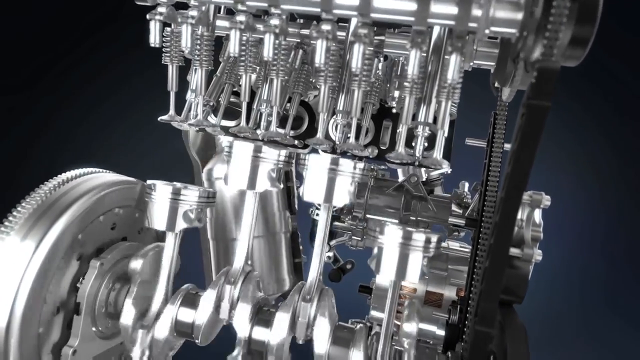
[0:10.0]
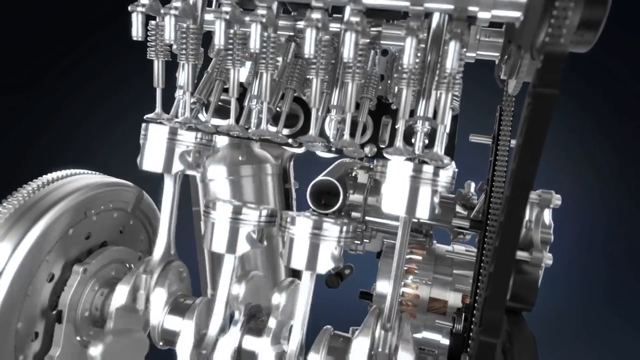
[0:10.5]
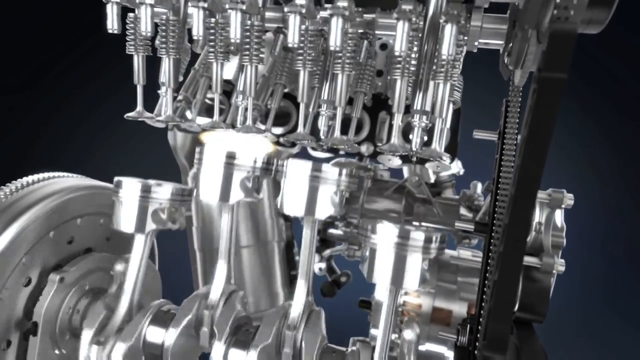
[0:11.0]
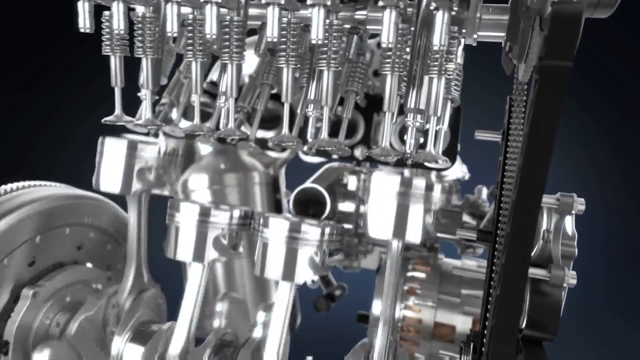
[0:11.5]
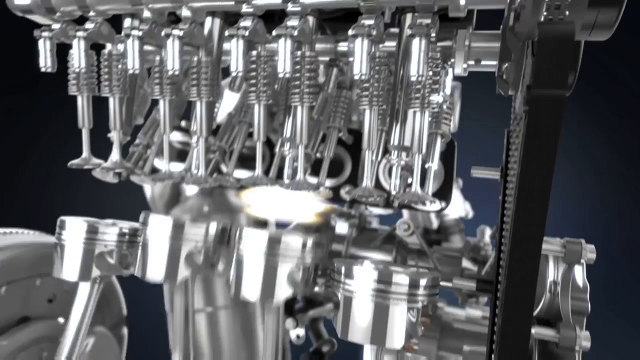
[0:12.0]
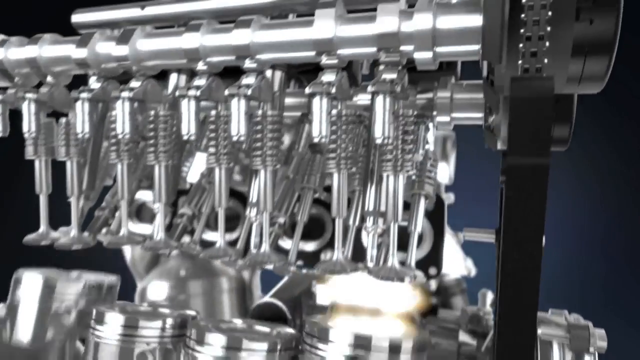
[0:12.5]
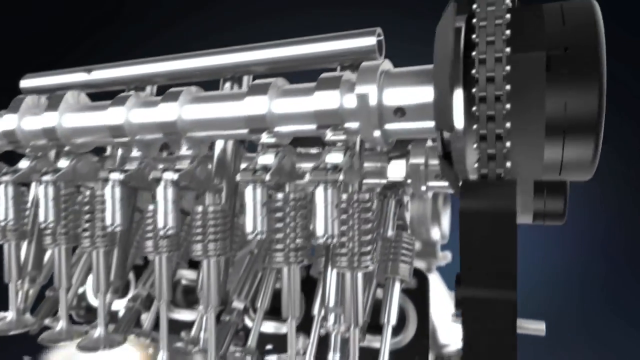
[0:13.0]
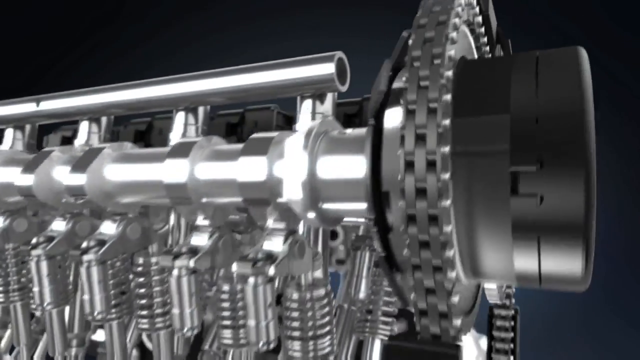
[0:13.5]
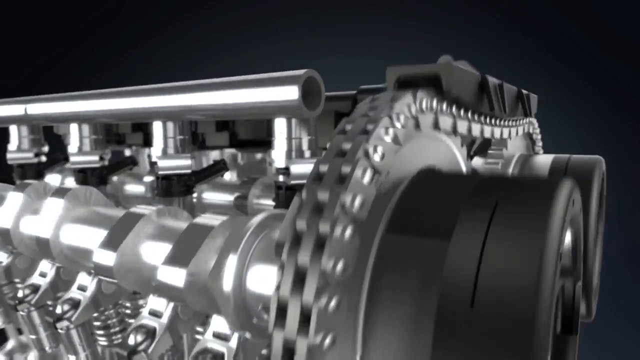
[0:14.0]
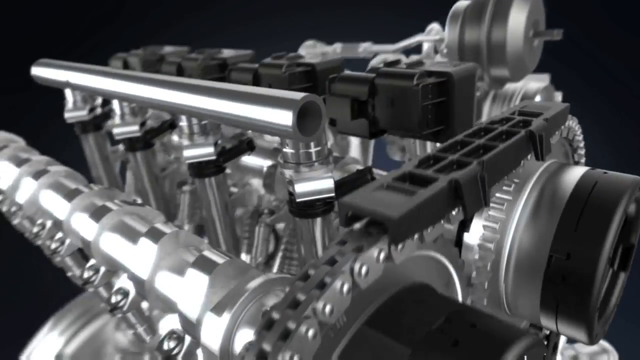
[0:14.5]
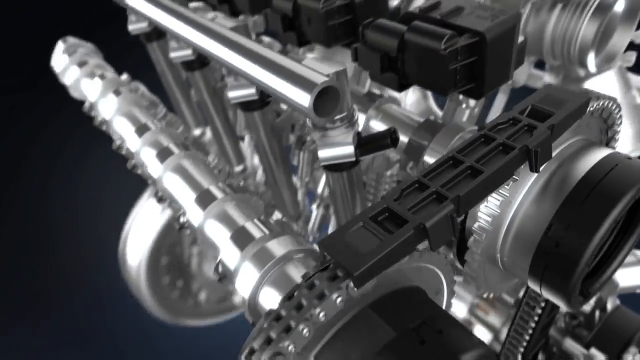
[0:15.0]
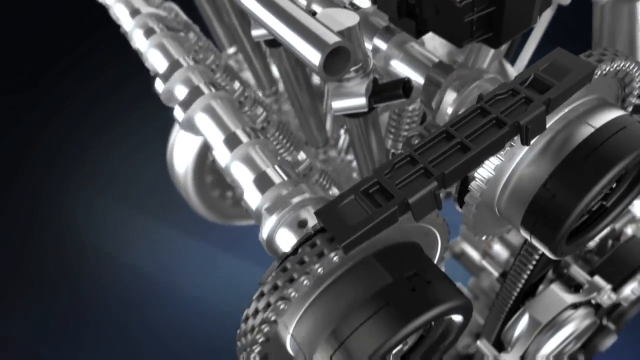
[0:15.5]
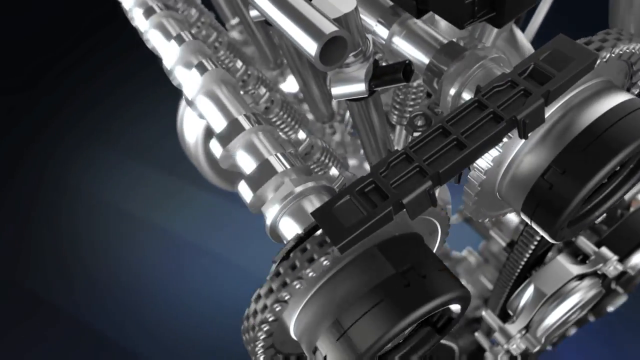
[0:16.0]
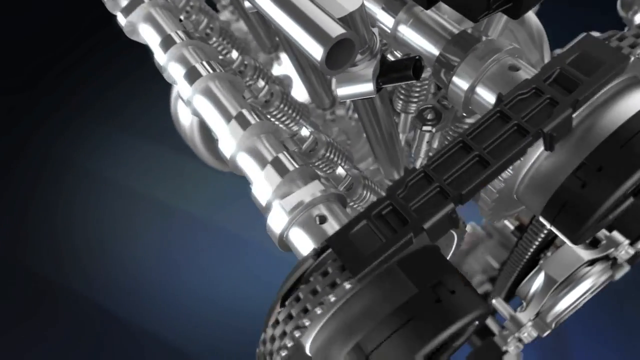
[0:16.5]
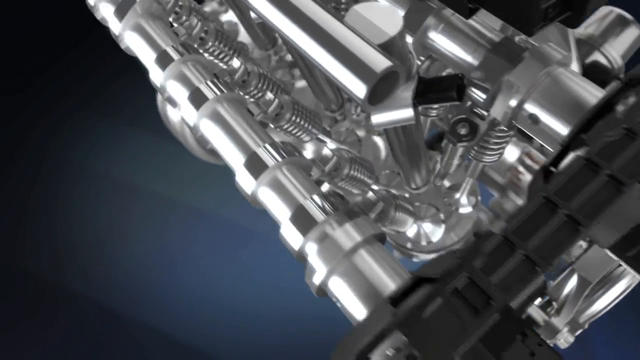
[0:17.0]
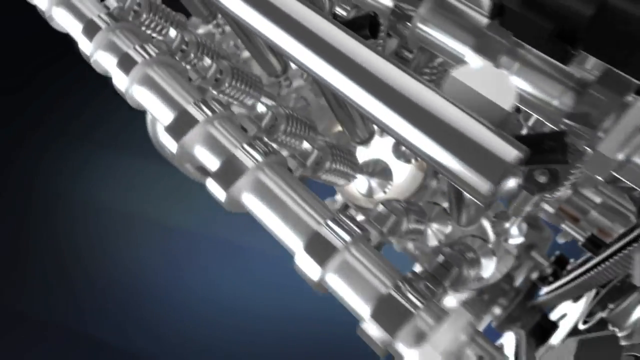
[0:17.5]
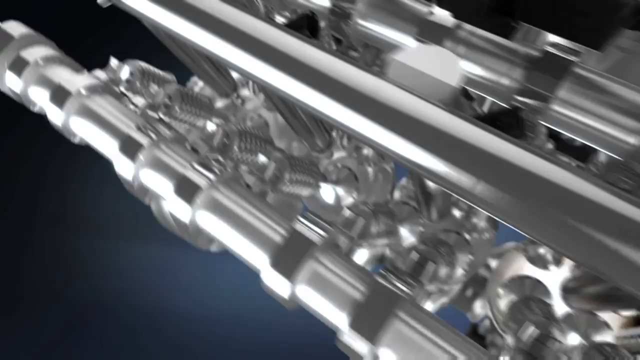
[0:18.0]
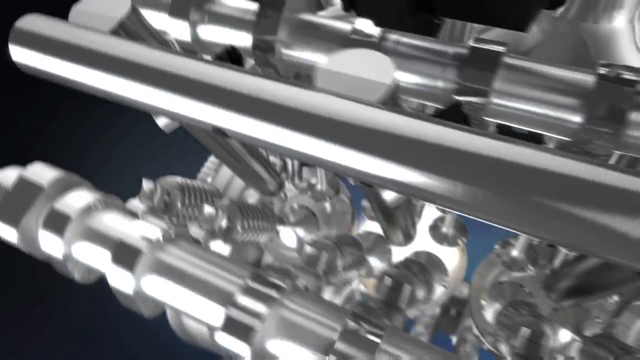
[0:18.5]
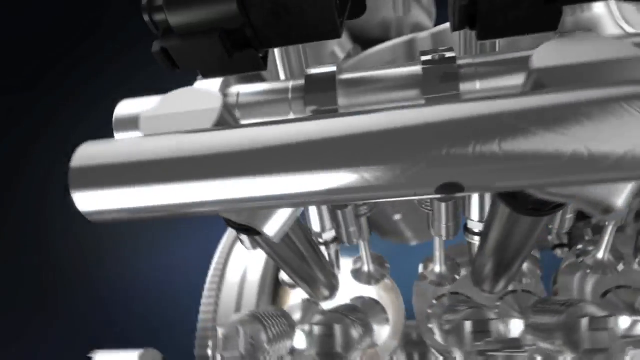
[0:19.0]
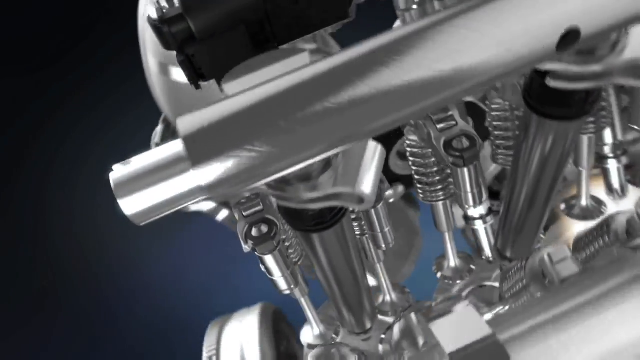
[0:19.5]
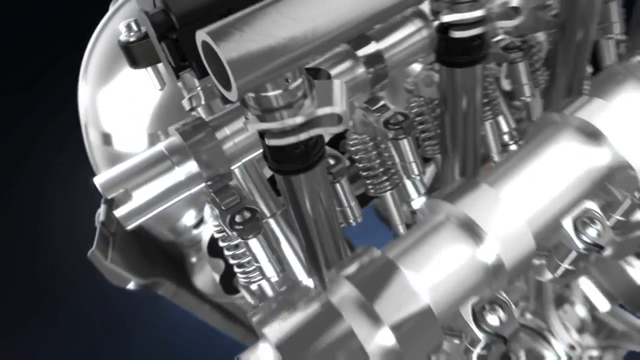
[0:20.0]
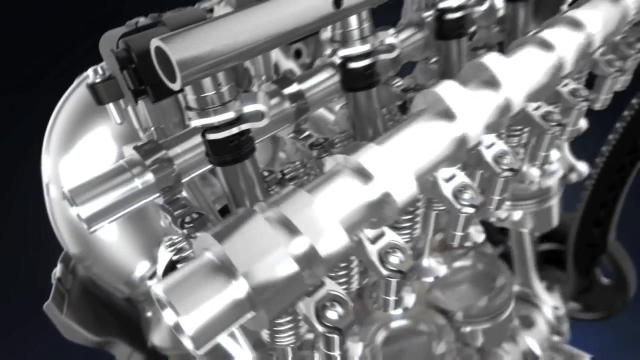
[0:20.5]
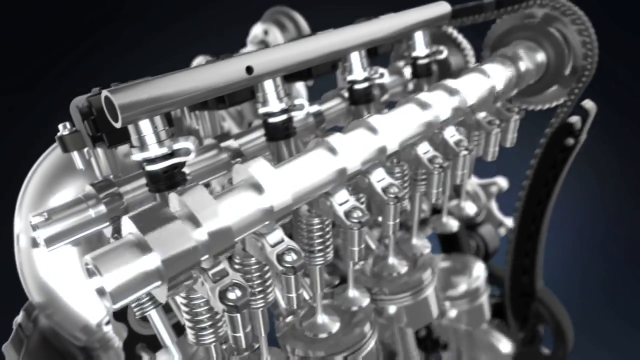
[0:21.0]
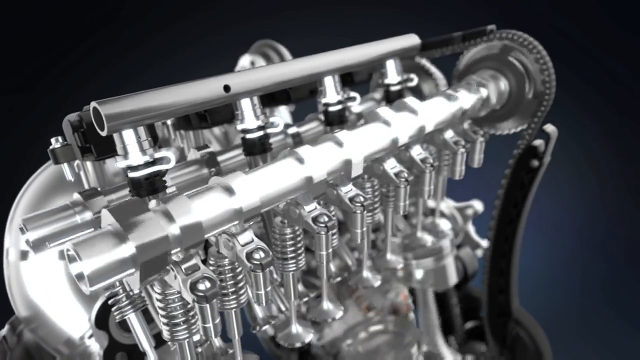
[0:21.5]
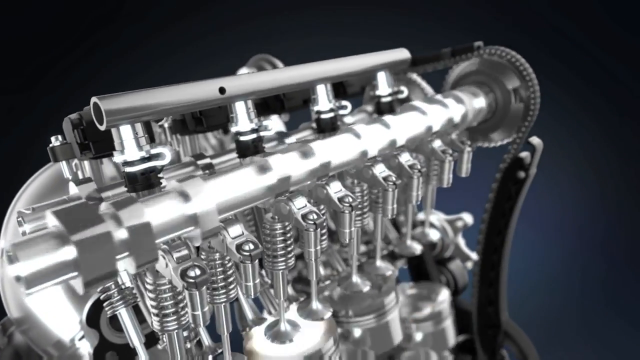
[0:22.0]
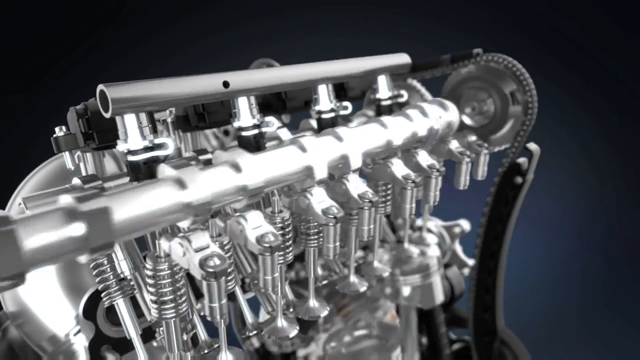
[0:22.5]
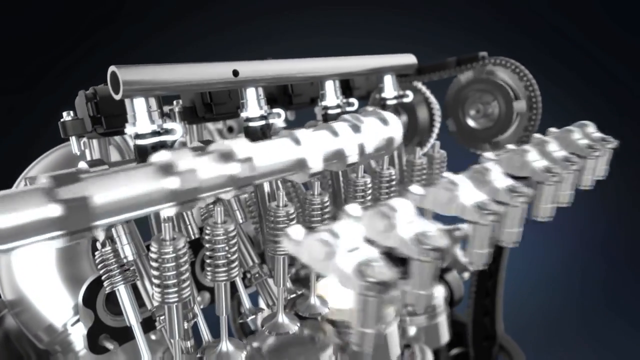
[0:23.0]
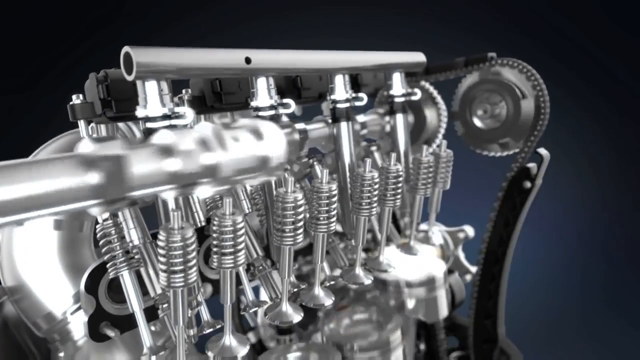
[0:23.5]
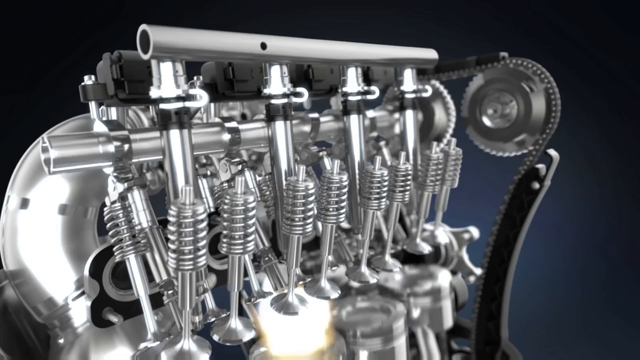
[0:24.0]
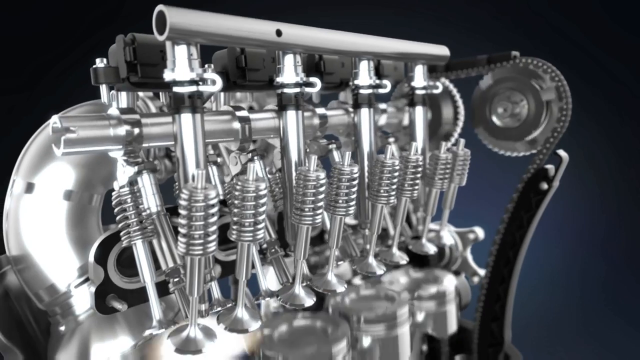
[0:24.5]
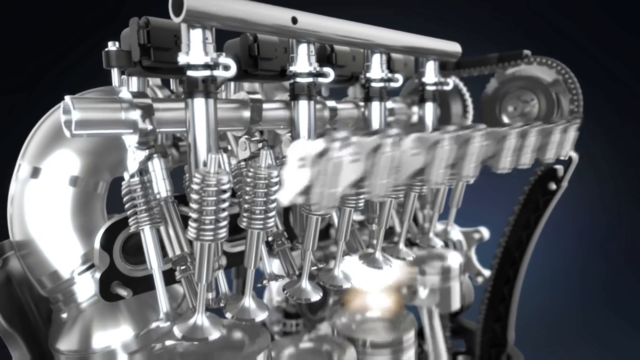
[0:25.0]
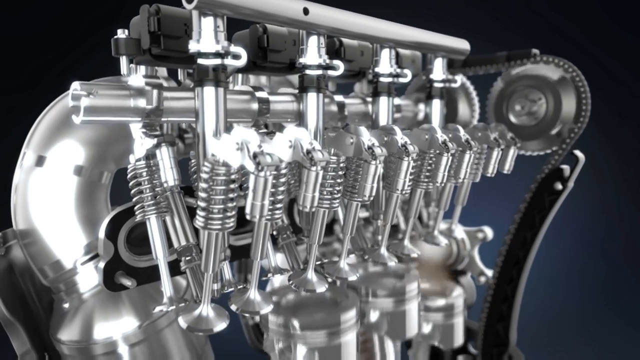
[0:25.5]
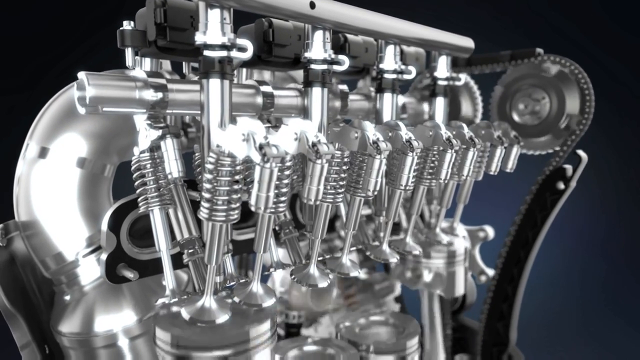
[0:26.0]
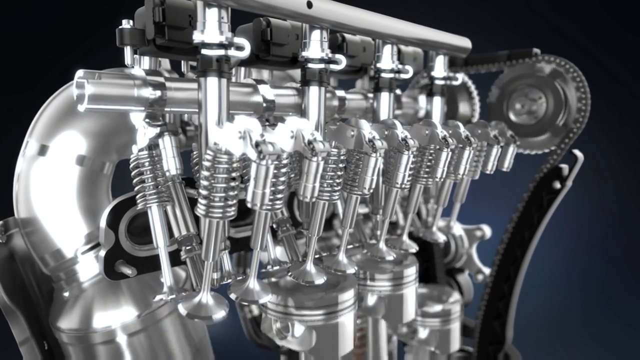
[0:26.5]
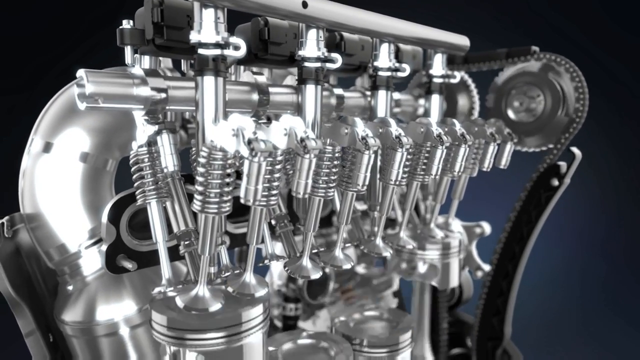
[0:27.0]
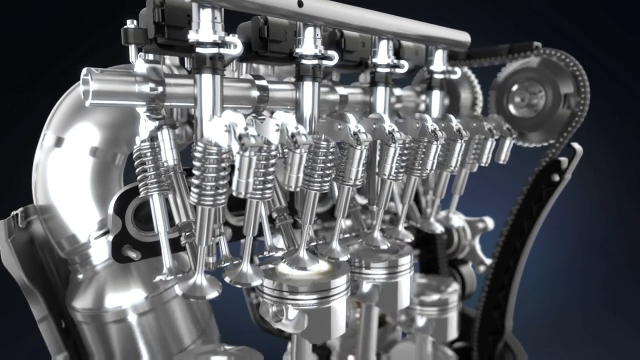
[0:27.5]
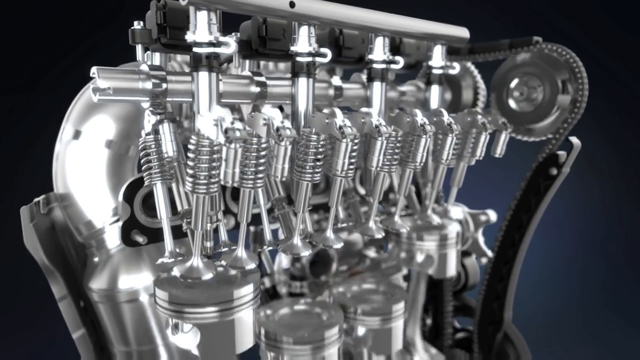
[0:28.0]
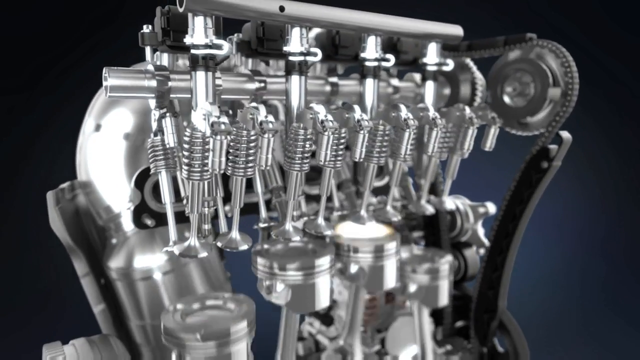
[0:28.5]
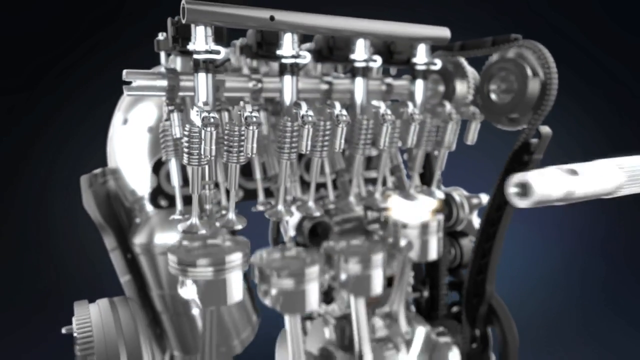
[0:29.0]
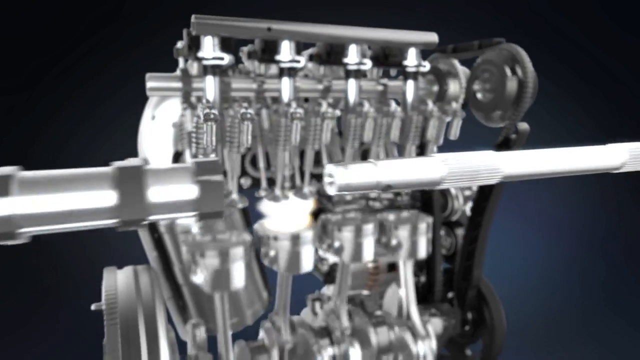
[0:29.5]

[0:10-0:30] The inner parts of an engine are shown in something like a diagram that works three-dimensionally. Components inside the engine go up and down repeatedly as a wheel spins on the left, and something like a chain runs through the system. Some circular chrome areas are put in place, and the spinning motion corresponds with the up-and-down motion in the background. The engine is then shown from a different angle, displaying the movement in those areas.